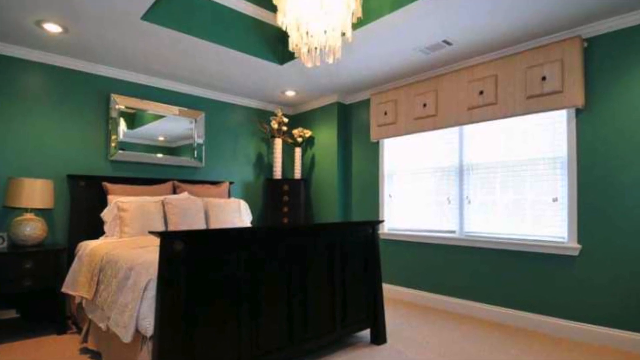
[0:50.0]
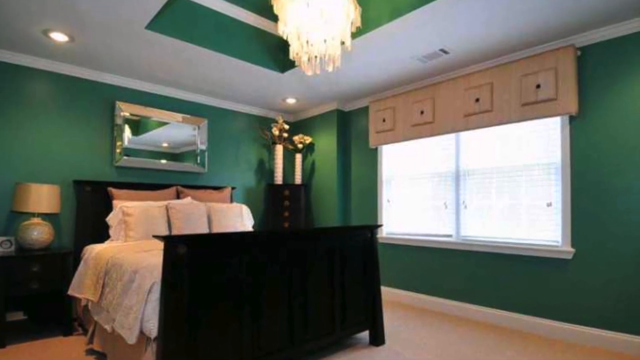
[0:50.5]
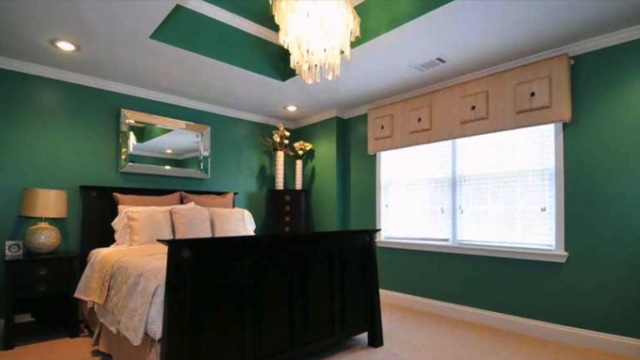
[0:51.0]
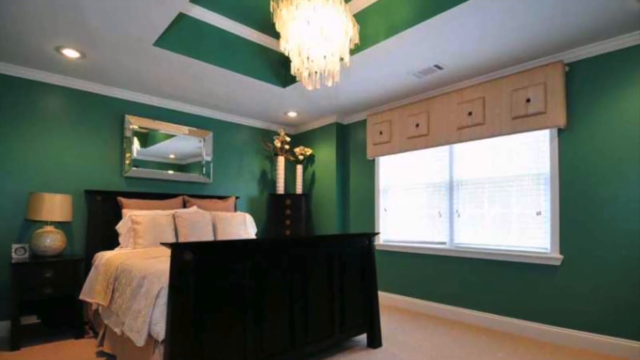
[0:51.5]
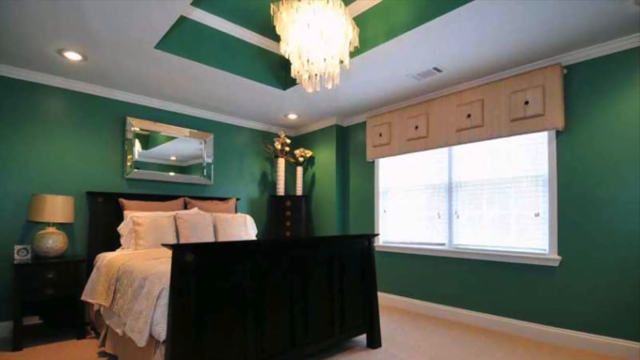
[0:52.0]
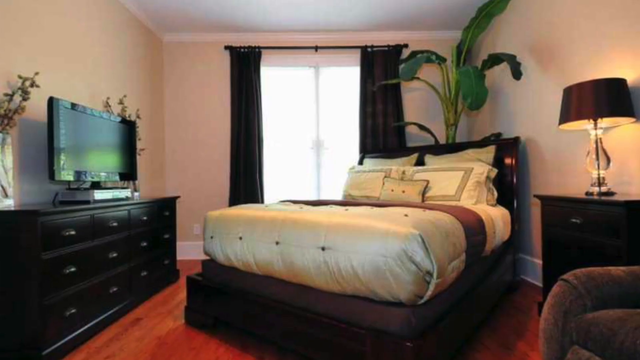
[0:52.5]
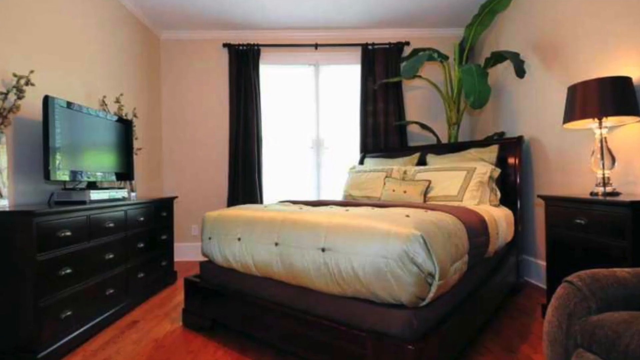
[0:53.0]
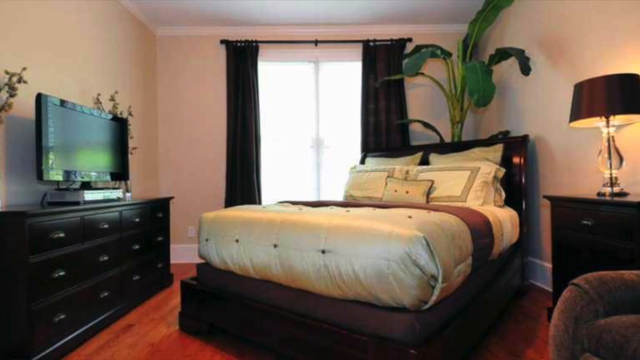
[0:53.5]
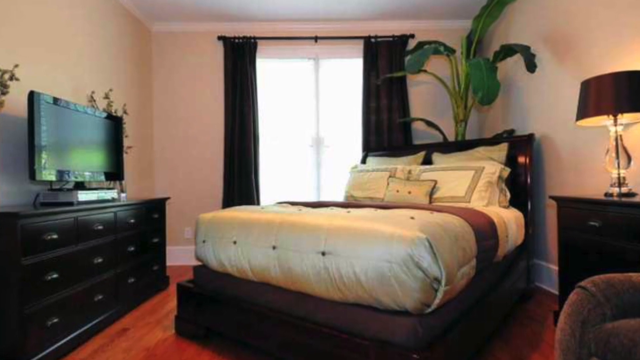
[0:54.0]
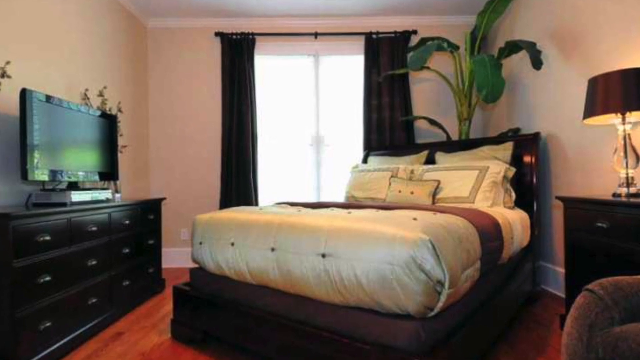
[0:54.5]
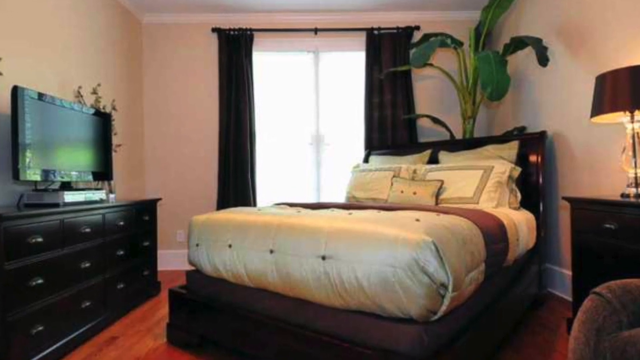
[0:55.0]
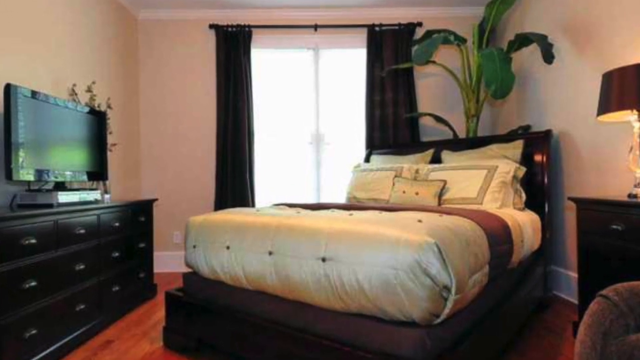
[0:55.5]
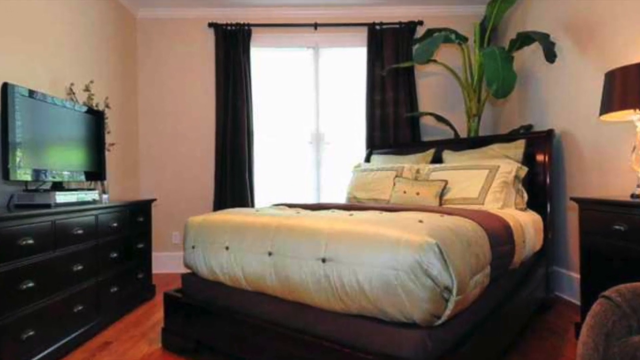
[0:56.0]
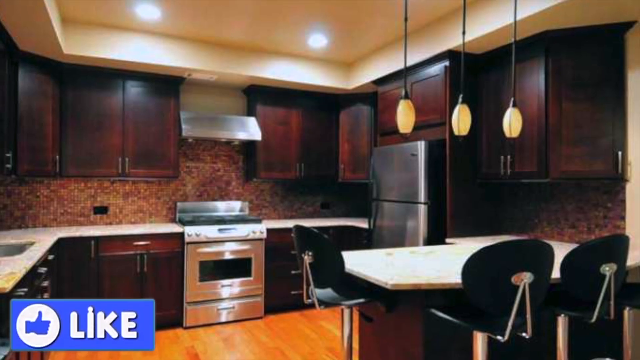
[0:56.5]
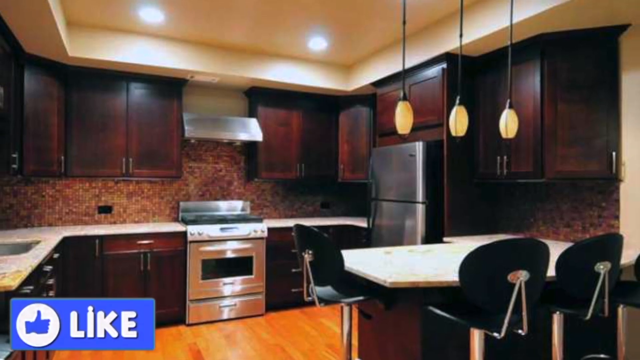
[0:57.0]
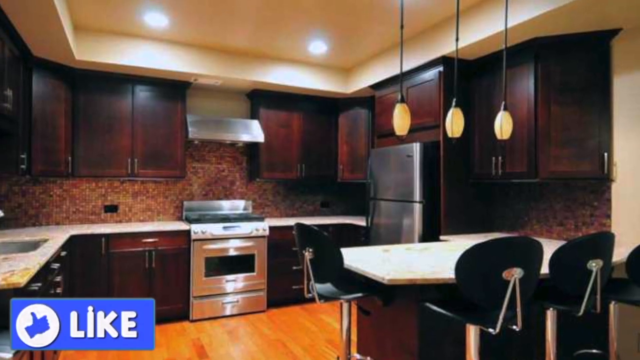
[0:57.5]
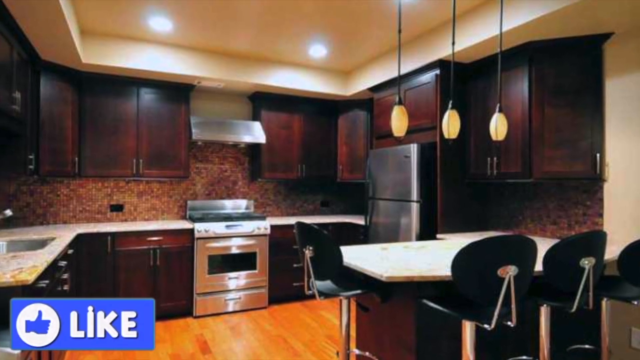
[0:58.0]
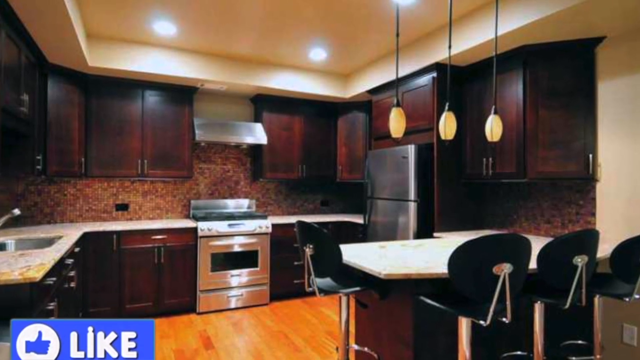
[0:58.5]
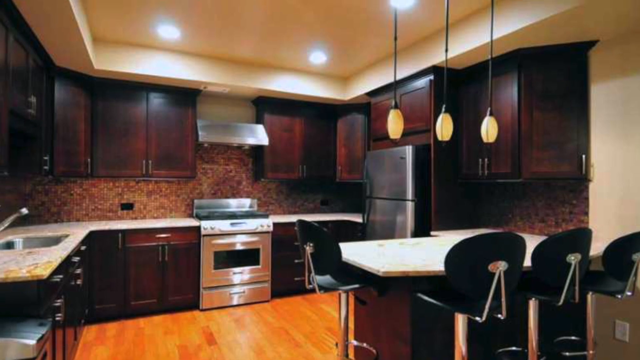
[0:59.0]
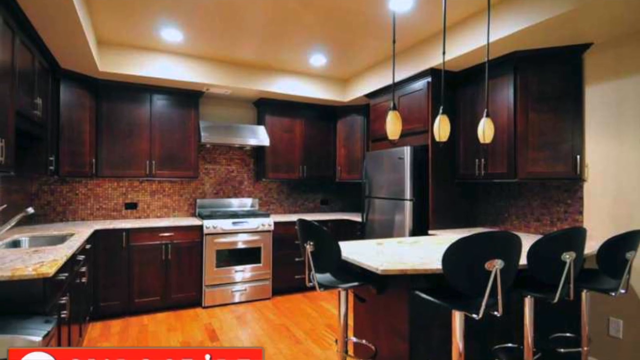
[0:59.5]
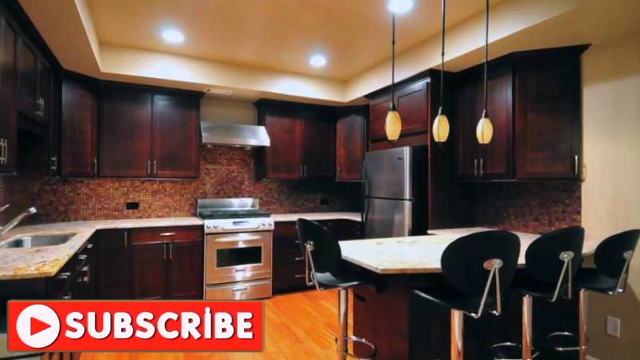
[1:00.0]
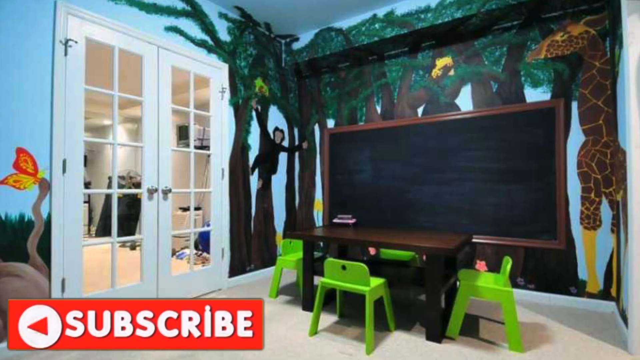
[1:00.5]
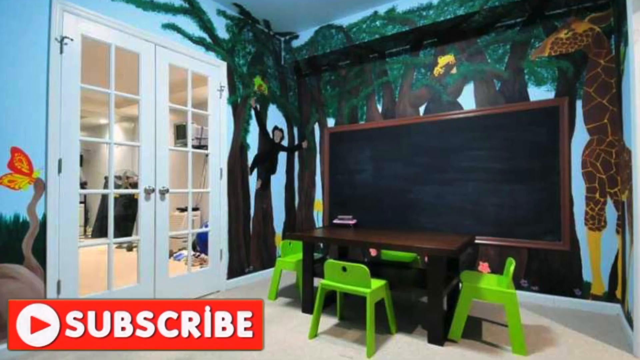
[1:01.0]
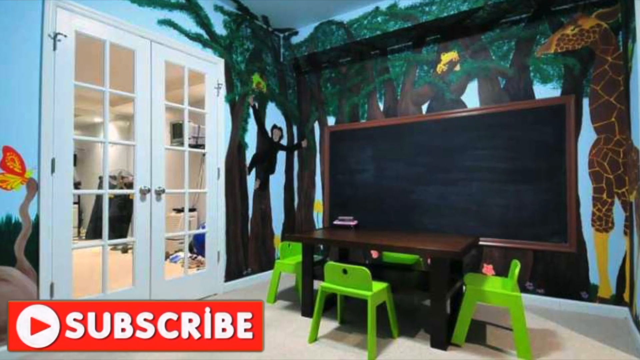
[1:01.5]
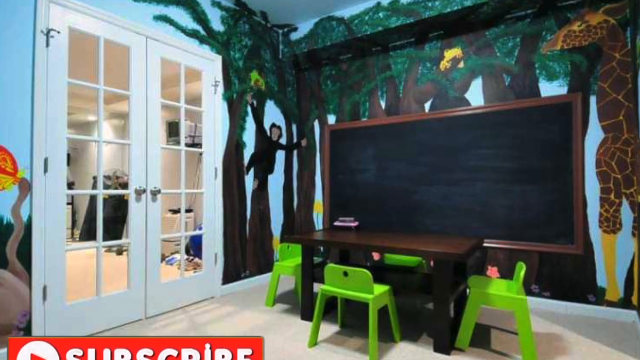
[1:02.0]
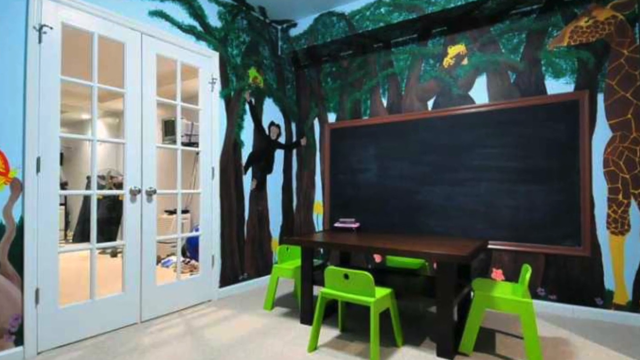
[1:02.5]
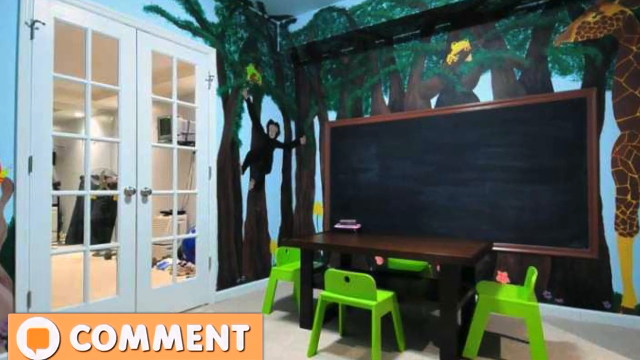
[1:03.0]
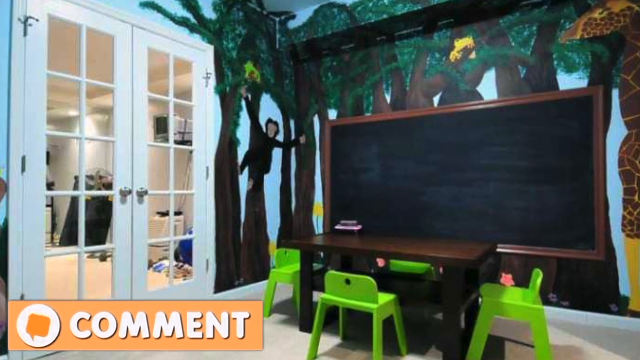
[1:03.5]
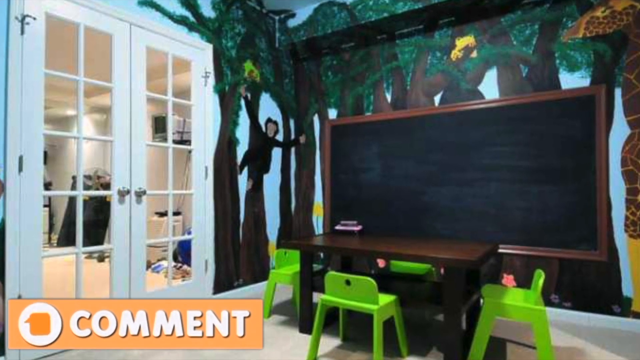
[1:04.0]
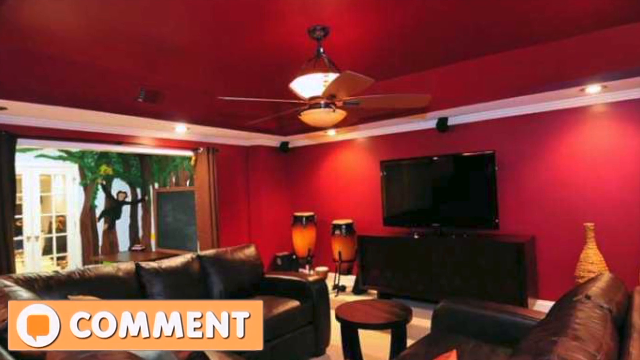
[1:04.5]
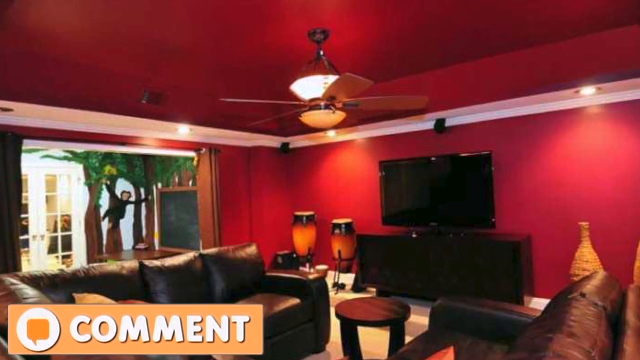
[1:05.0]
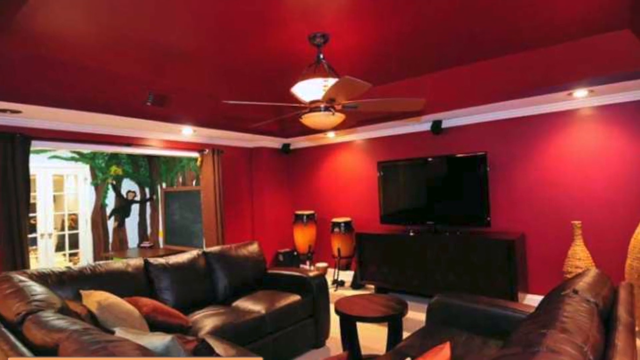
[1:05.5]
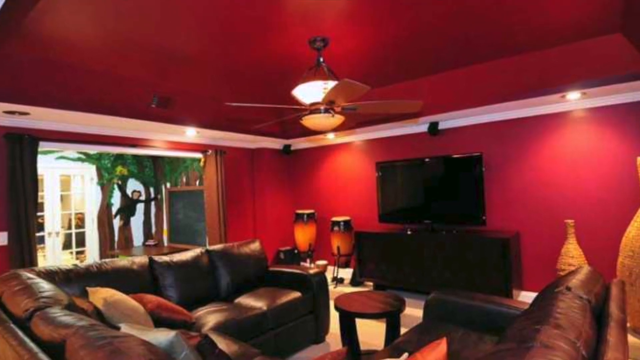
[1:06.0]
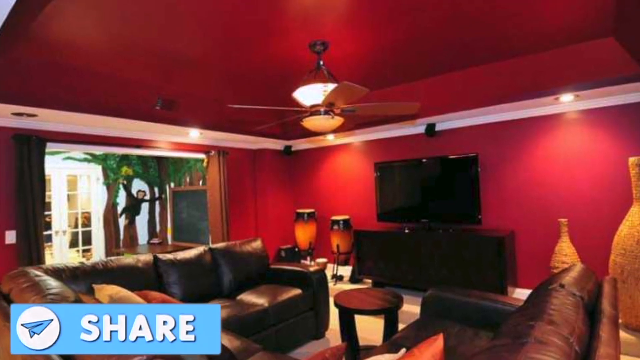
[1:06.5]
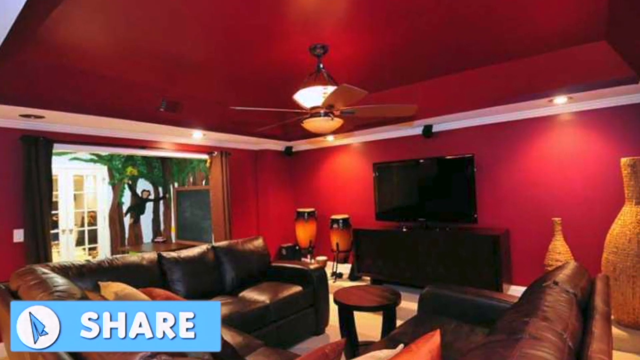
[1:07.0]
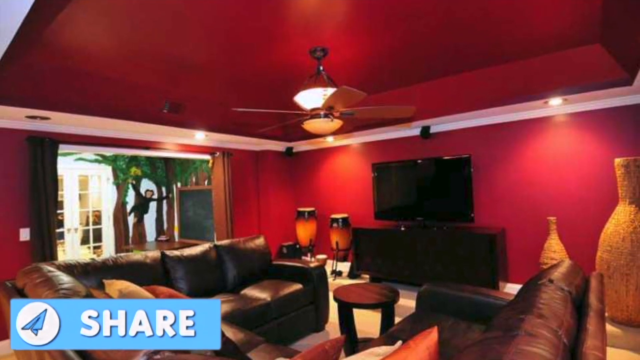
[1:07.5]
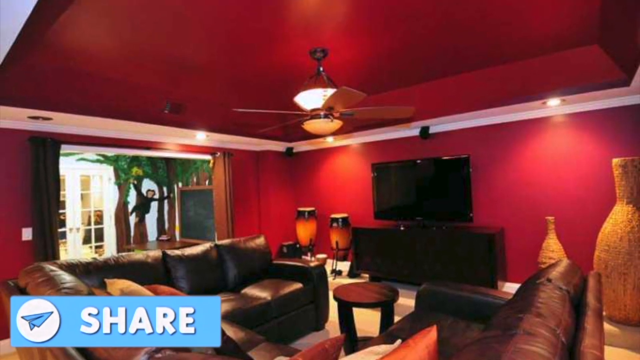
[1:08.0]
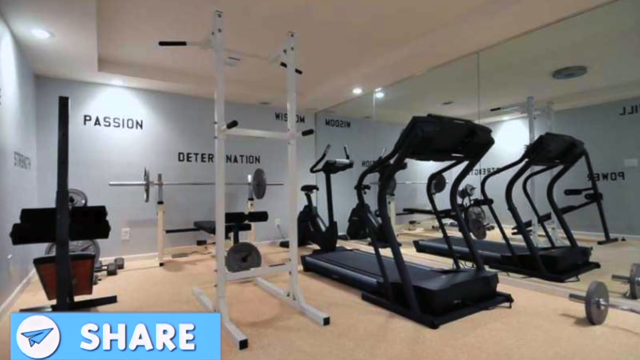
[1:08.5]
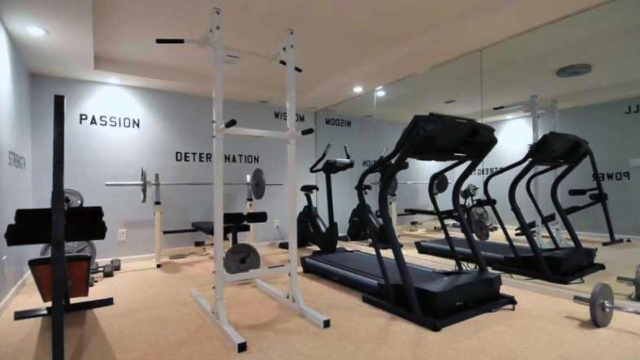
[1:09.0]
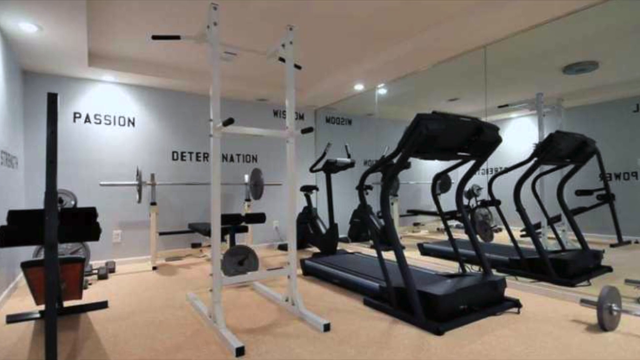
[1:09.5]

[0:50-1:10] A bedroom with green walls has white bedding on a bed with a black frame. Another, smaller bedroom follows, with a bed in the corner angled diagonally, a chest of drawers with a TV on top of it, and a glass door with a curtain on it. The scene transitions to a kitchen with dark-colored cupboards, silver appliances such as a fridge and an extractor with an oven, and a kitchen island with black stools. Next is a children's playroom with a black chalkboard and jungle vinyl on the walls. Another sitting area follows, with red walls, a U-shaped black couch, some bongos in the corner, and a TV on top of a TV display cabinet. Finally, a gym appears with equipment such as treadmills and lifting benches, as well as large mirrors.